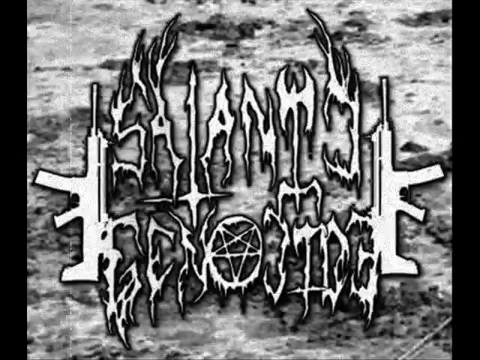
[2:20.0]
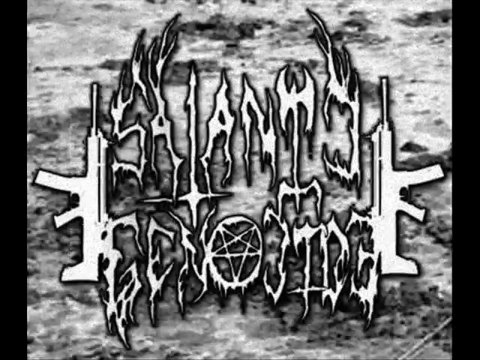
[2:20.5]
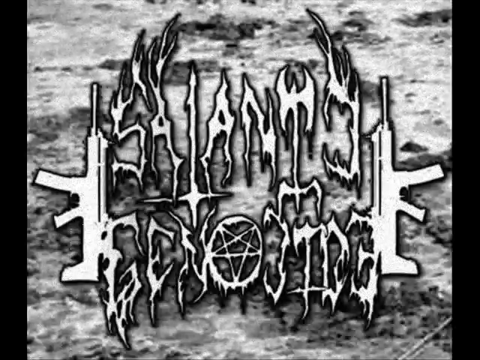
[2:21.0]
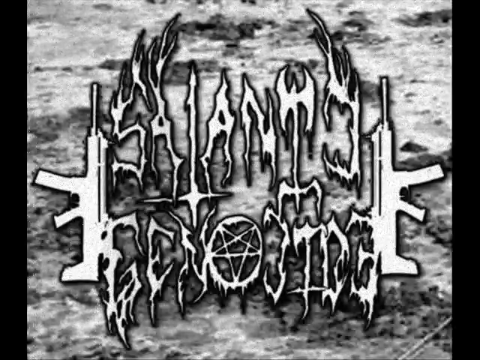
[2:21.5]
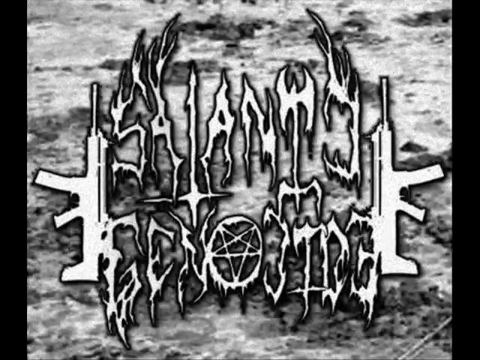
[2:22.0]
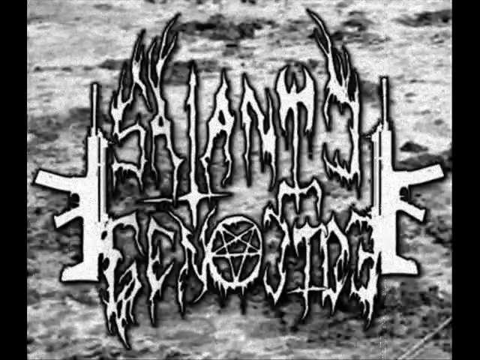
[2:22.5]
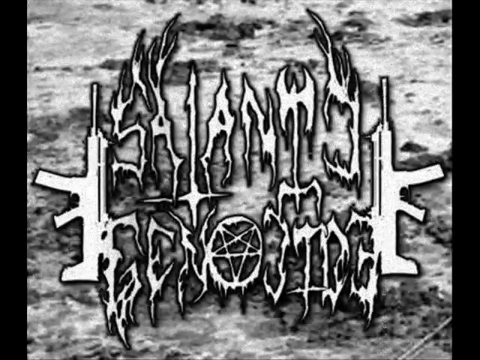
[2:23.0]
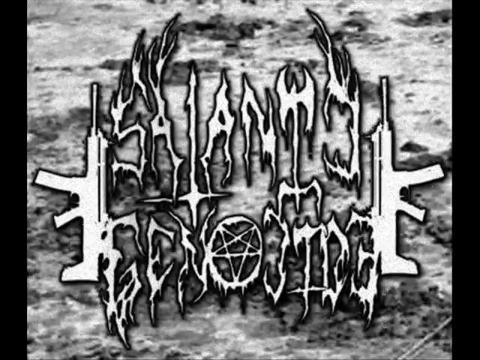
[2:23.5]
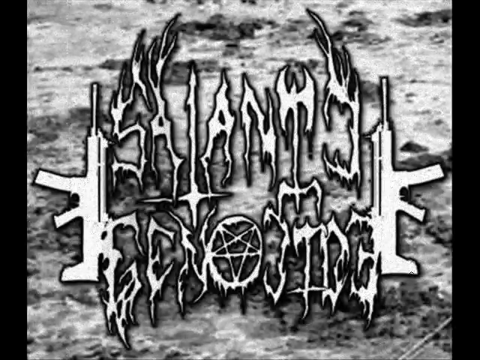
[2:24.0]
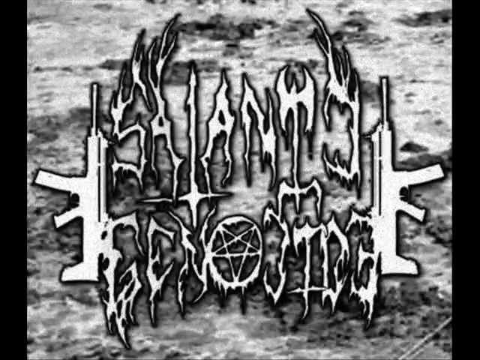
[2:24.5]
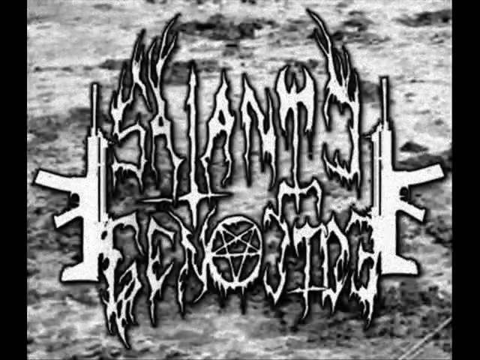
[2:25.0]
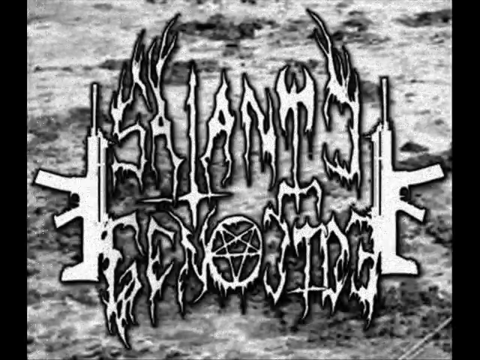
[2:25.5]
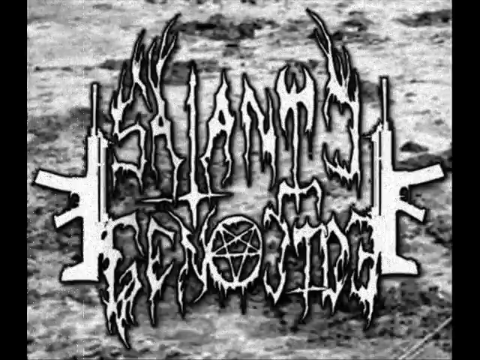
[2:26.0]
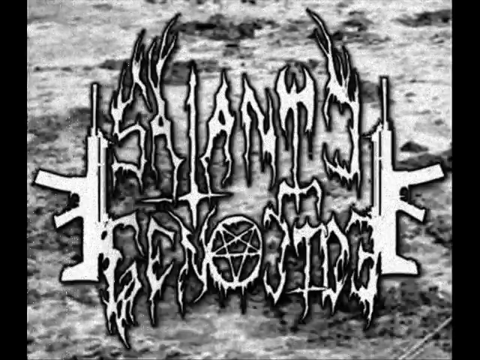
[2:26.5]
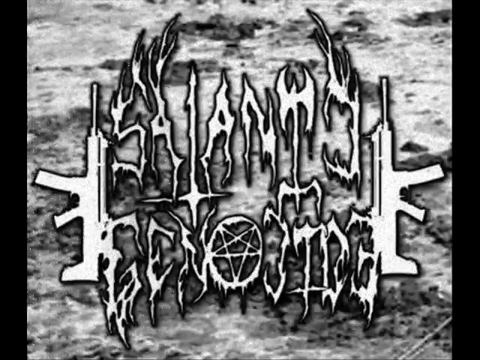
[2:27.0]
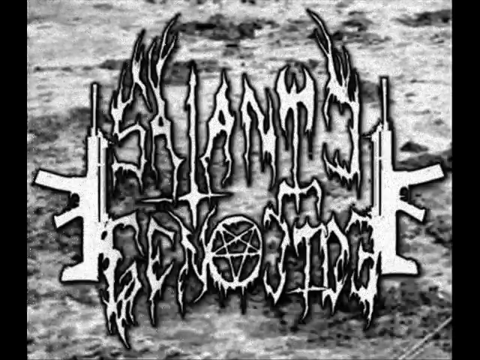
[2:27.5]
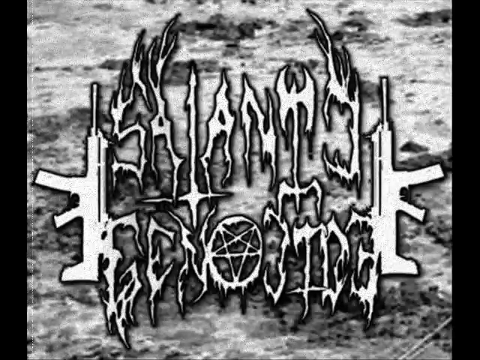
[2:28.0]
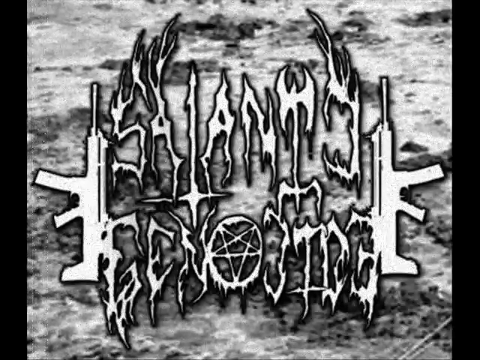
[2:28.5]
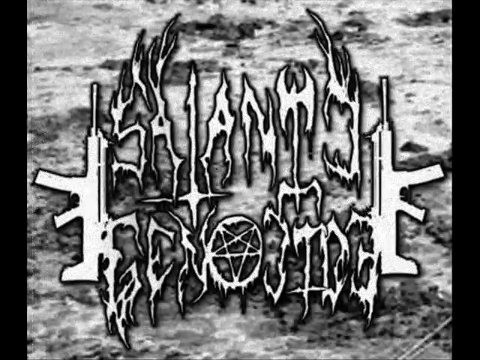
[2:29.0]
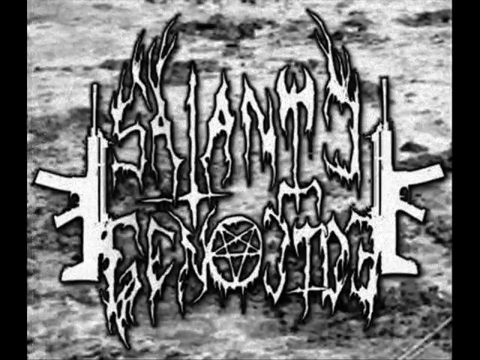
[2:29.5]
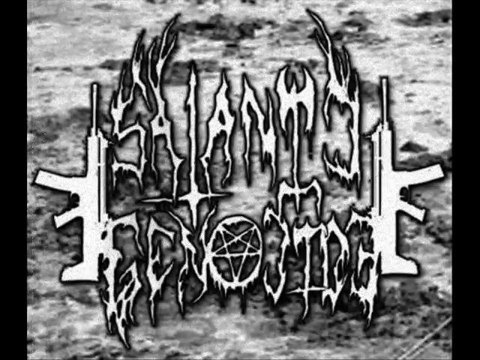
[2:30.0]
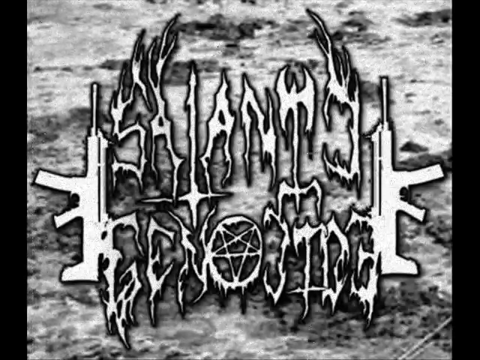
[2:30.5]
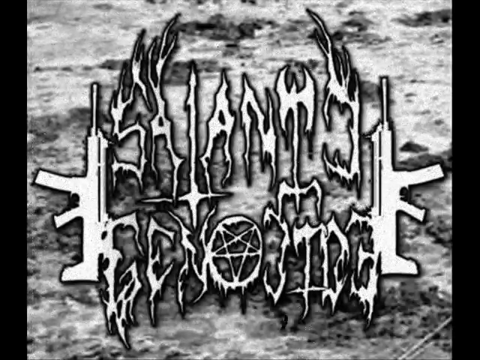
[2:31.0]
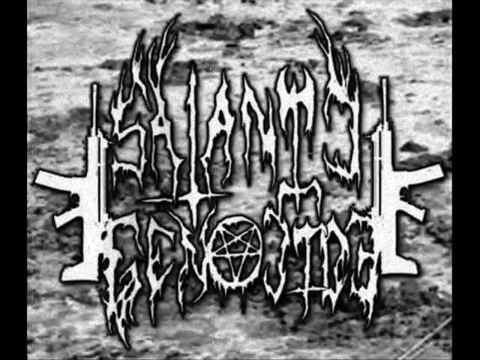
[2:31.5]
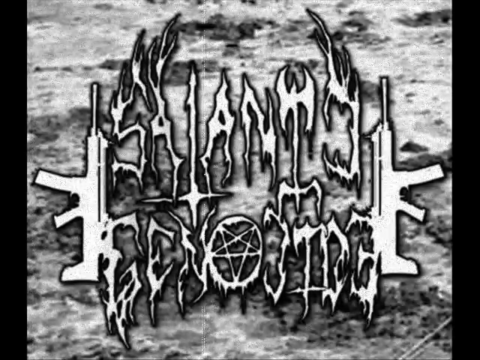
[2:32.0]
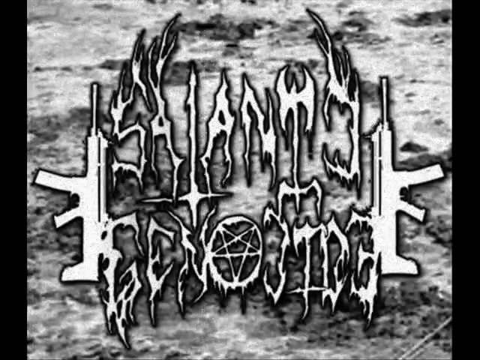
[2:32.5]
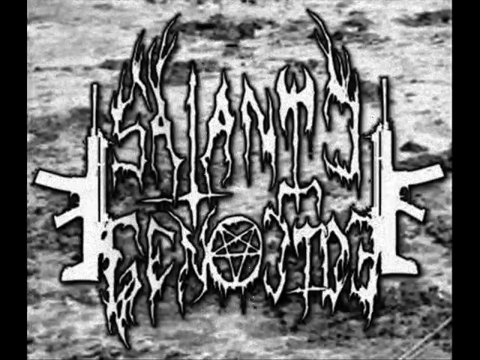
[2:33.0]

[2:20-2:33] More projected burn circles and projector lines appear, like those in old, worn-out film.